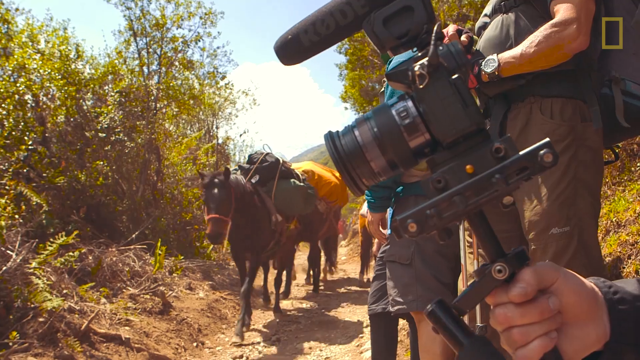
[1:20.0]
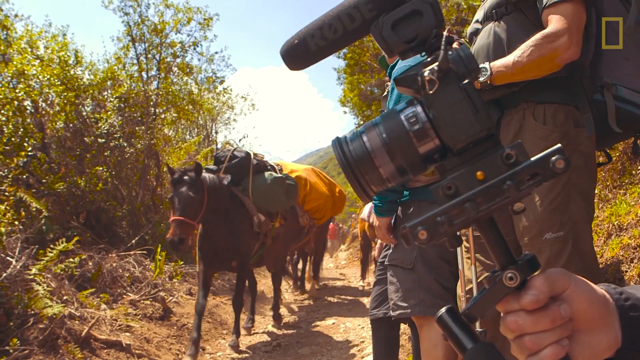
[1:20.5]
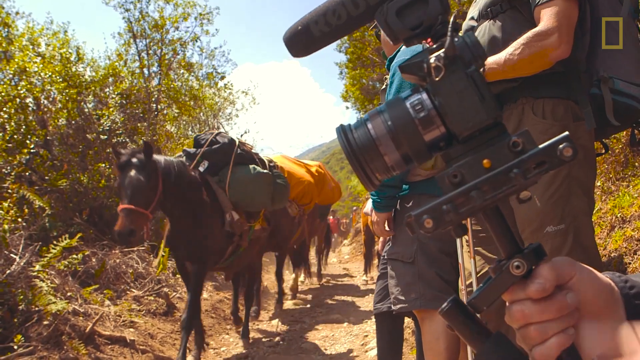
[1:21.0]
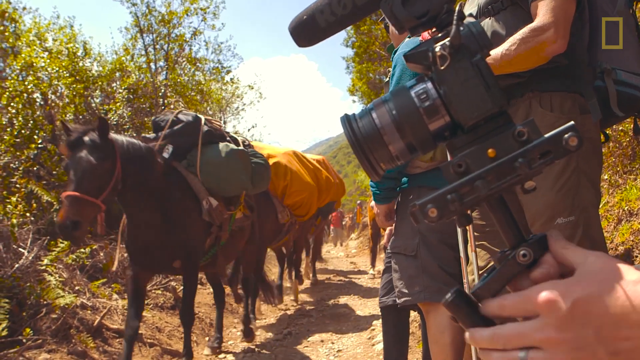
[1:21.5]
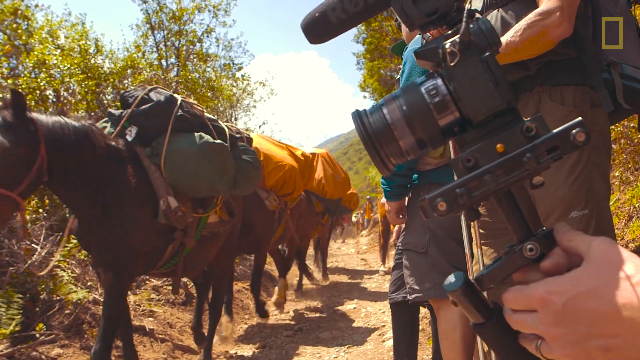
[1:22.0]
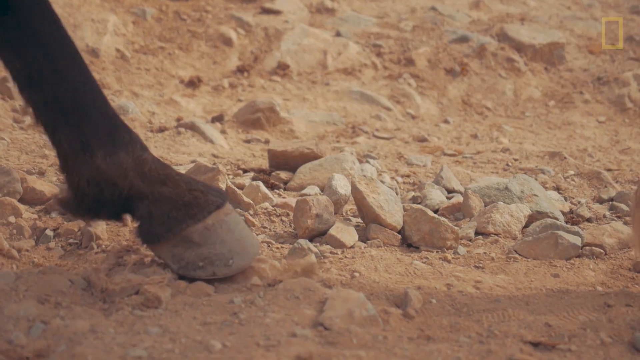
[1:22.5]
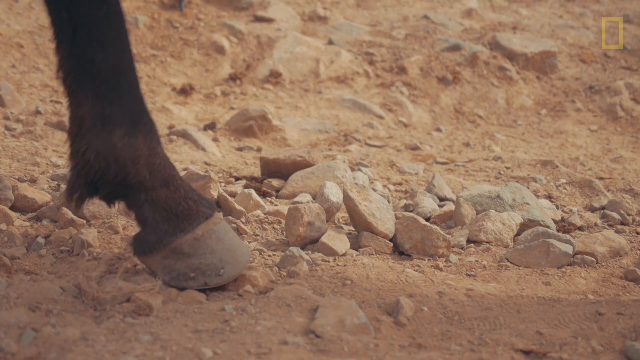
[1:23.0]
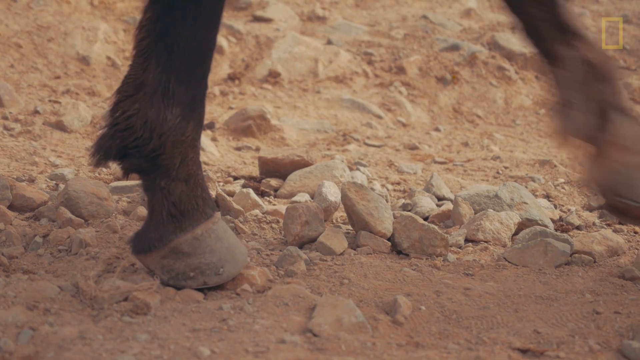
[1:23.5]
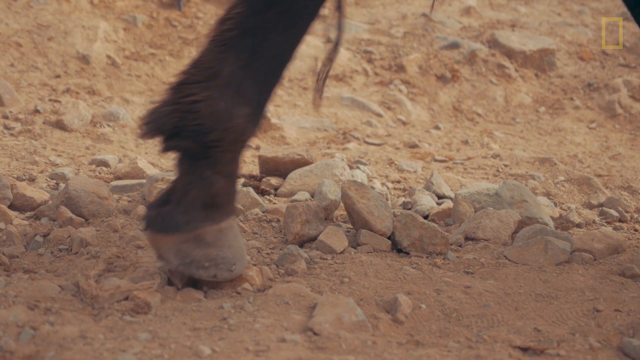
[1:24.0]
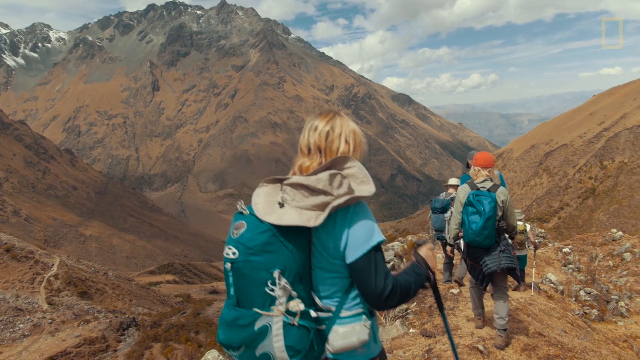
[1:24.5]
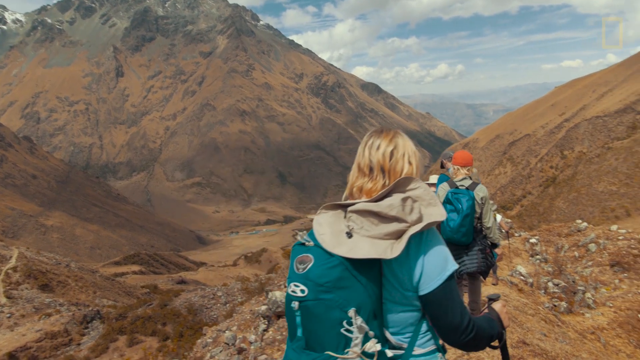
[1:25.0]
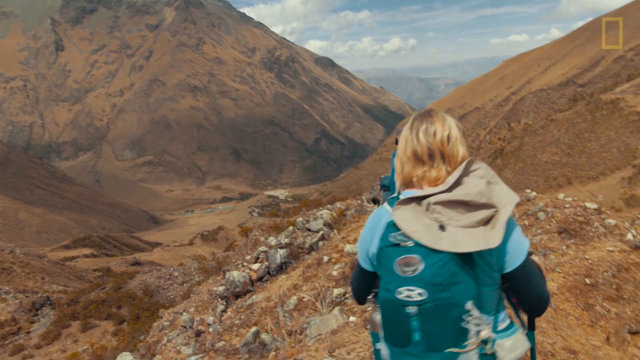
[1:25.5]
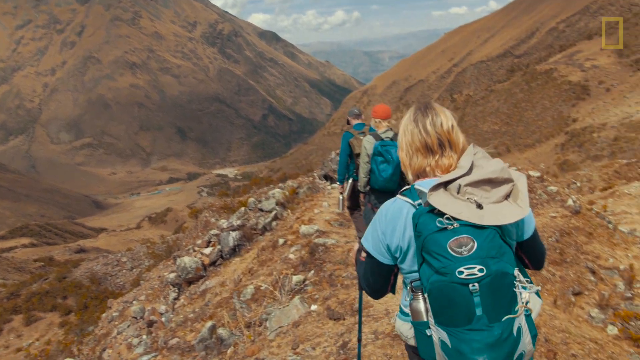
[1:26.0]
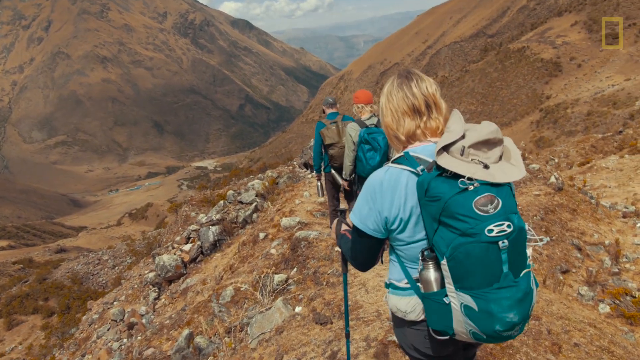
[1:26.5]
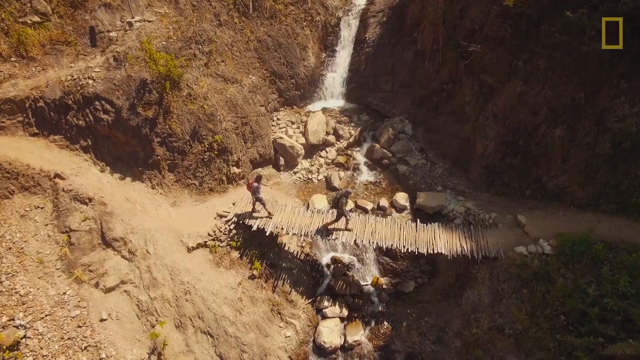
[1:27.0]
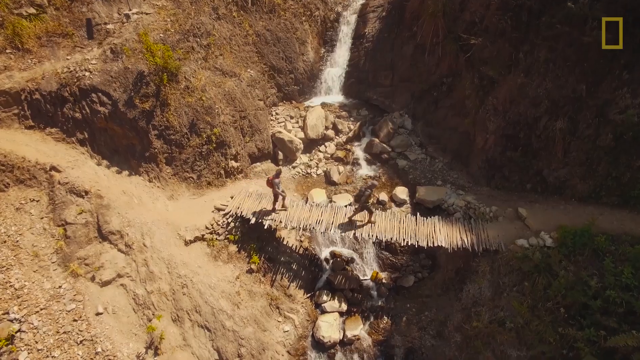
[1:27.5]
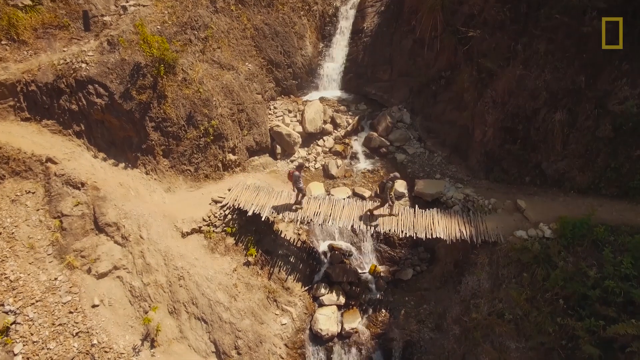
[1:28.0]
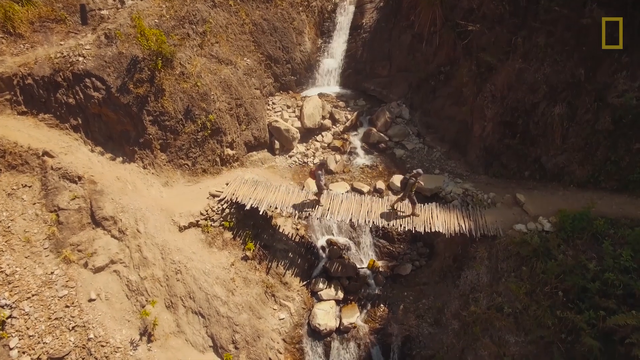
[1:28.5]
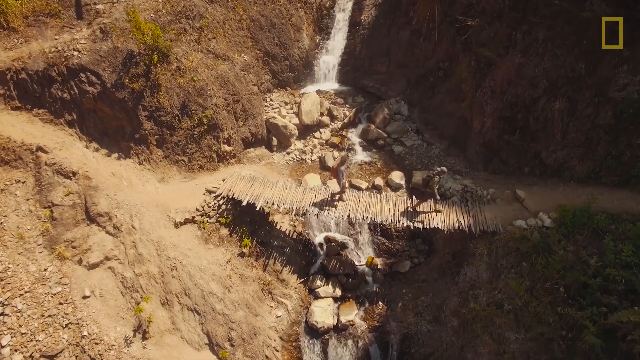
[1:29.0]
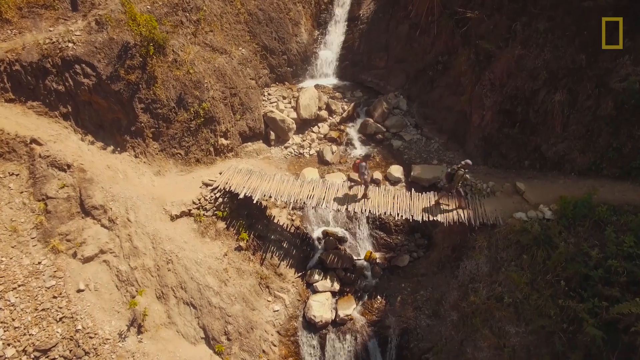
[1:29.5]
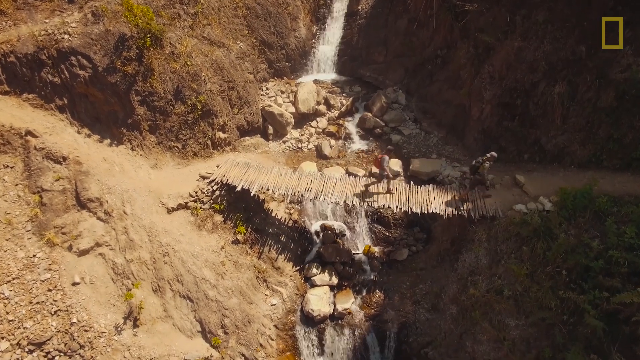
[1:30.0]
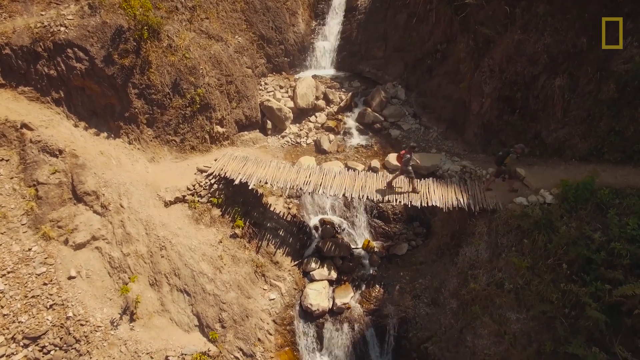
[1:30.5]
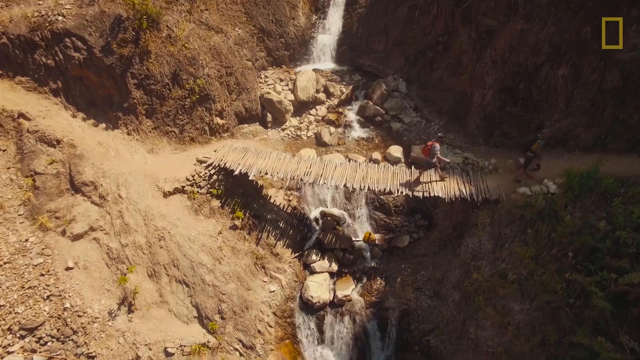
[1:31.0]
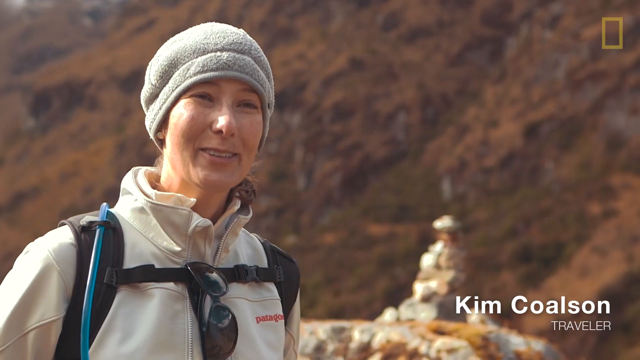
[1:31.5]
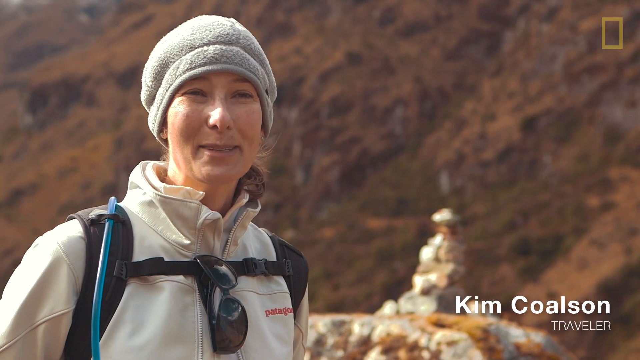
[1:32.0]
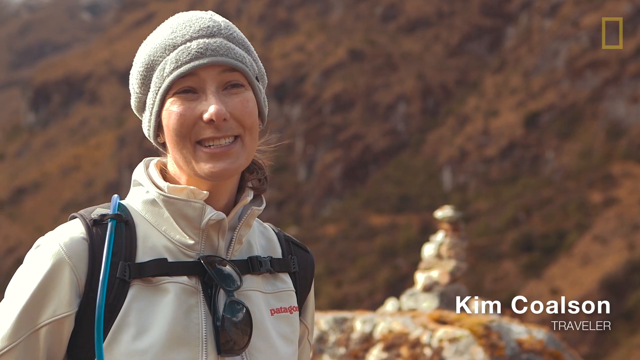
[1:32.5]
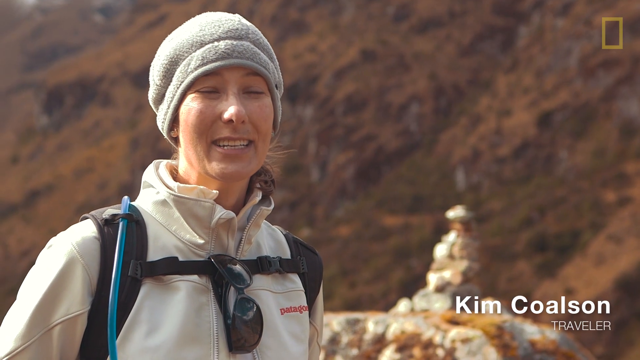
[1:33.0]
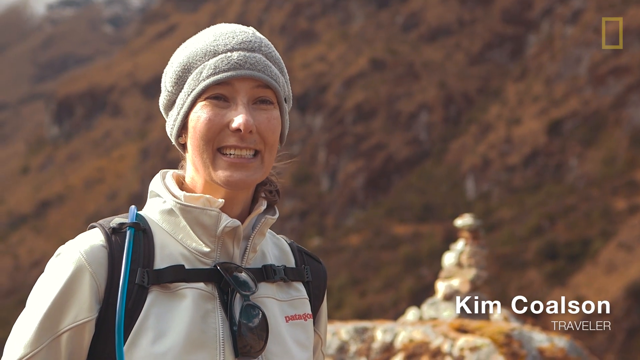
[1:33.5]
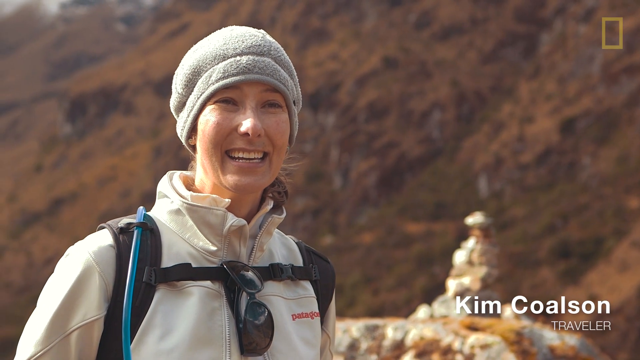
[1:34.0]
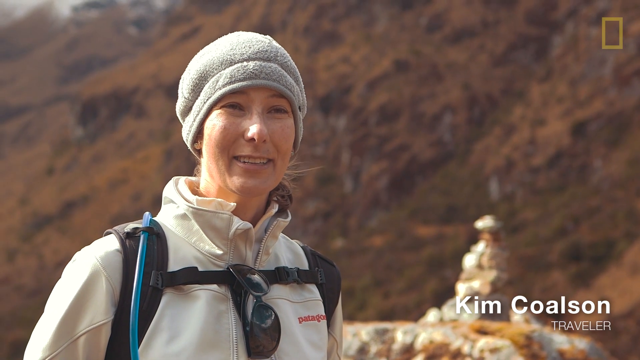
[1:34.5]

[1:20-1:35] Bay pack horses with packs on their backs stroll up the trail. A close-up shows their hooves hitting the ground, which is covered with smaller rocks, some up to the size of a fist; the trail is defined but still rocky and rough. A couple of horses are tied together. A string of backpackers follows, wearing backpacks and jackets, trekking poles in hand; most wear hats, and those not wearing sunglasses have them tucked into their straps. The wind is not blowing on this group. From high above at another place in the valley, the view looks down at a wood bridge that appears to be made of small sapling trees cut and laid side by side, crossing over a waterfall going down a gorge; the bridge has no handrails. A photographer stands beside the trail taking pictures of the pack horses moving up. Another traveler, Kim Coulson, stands in her cap and coat, talking.